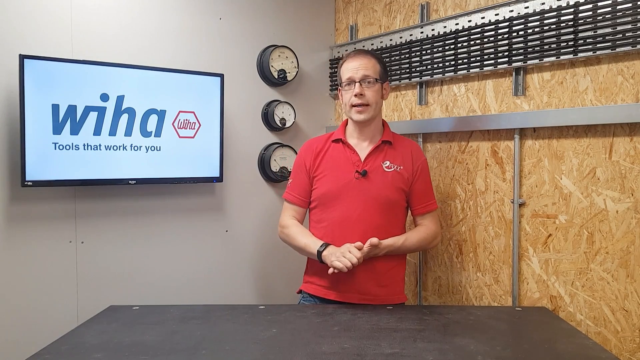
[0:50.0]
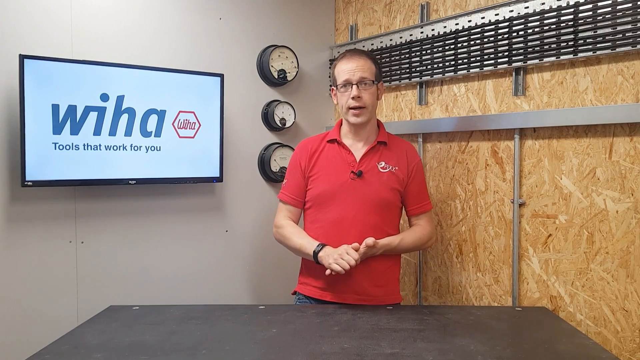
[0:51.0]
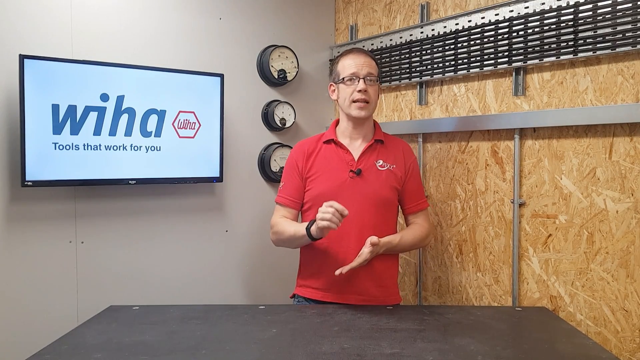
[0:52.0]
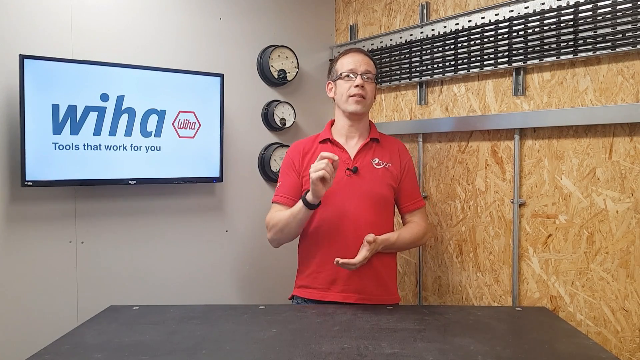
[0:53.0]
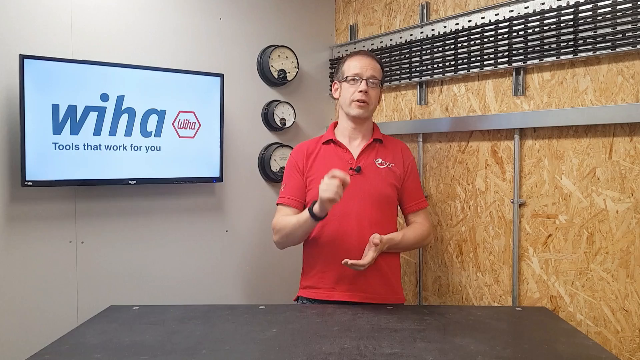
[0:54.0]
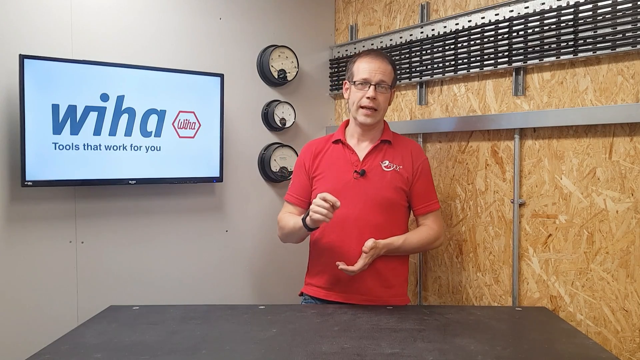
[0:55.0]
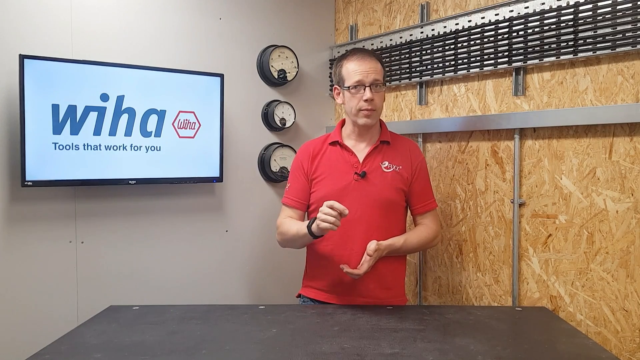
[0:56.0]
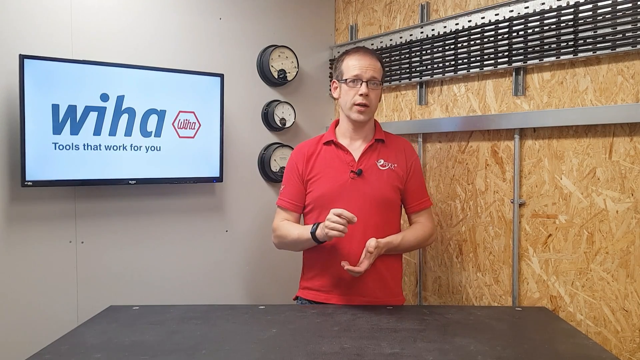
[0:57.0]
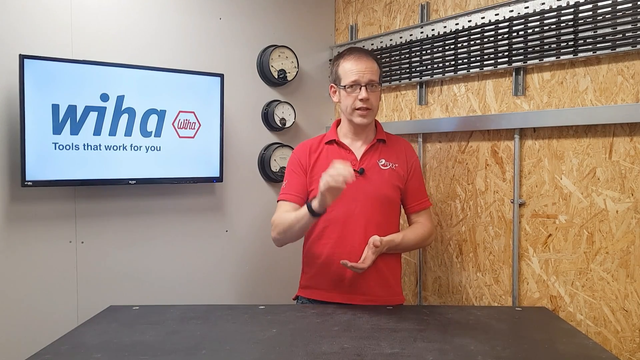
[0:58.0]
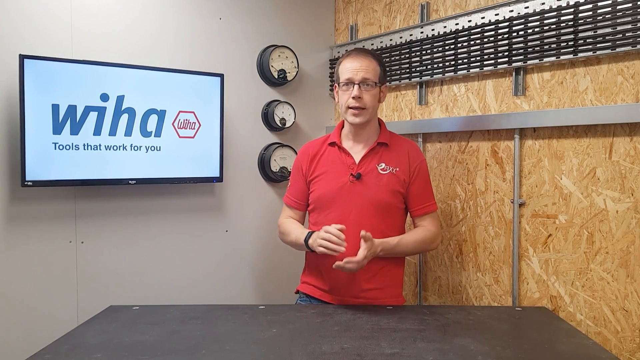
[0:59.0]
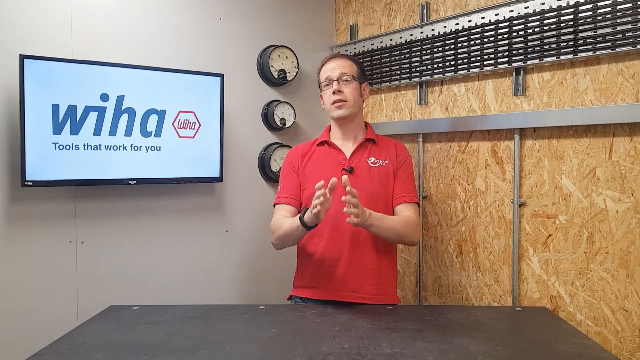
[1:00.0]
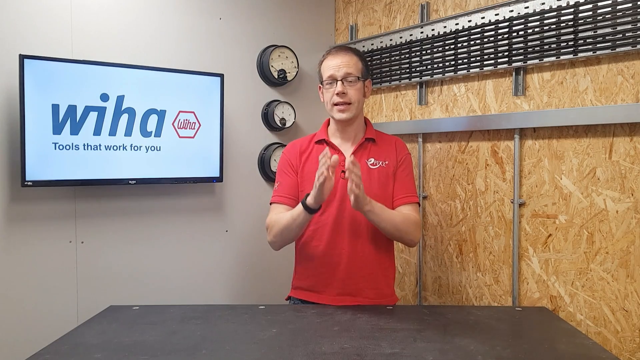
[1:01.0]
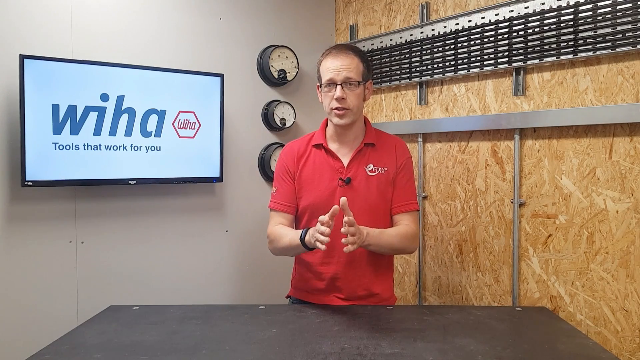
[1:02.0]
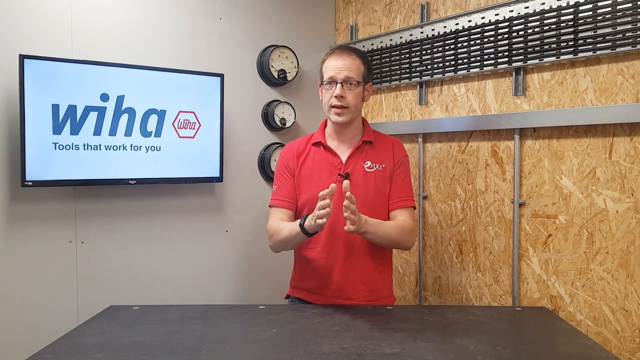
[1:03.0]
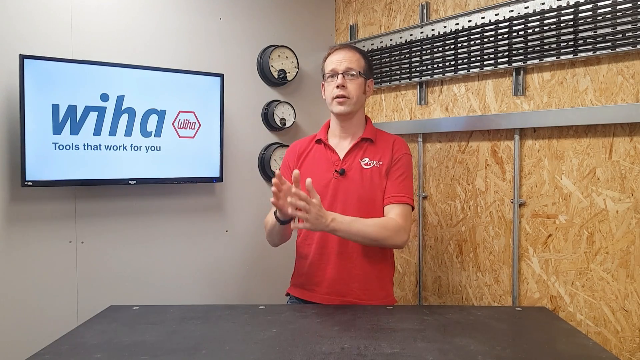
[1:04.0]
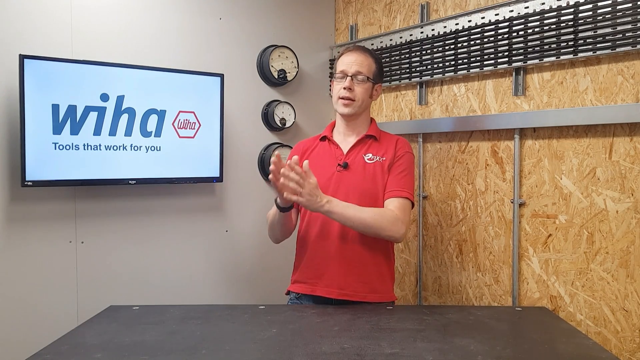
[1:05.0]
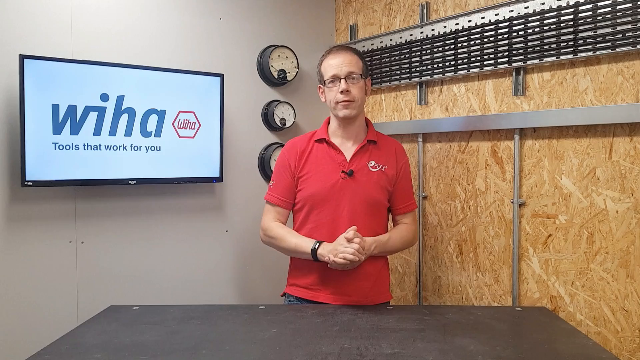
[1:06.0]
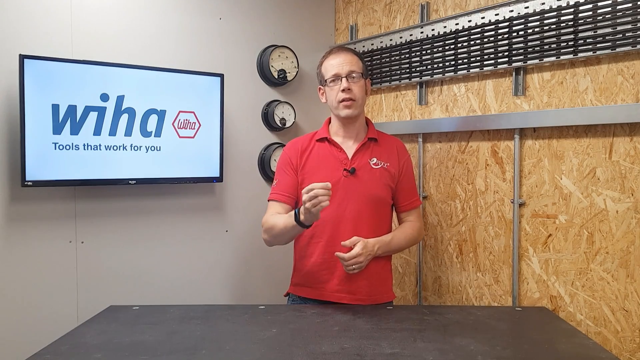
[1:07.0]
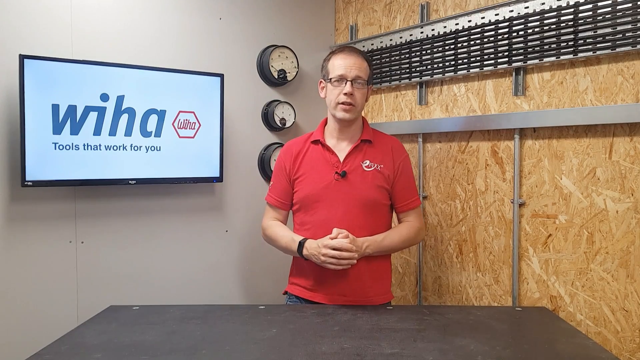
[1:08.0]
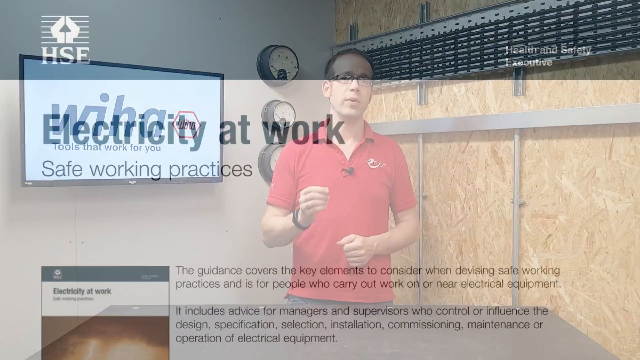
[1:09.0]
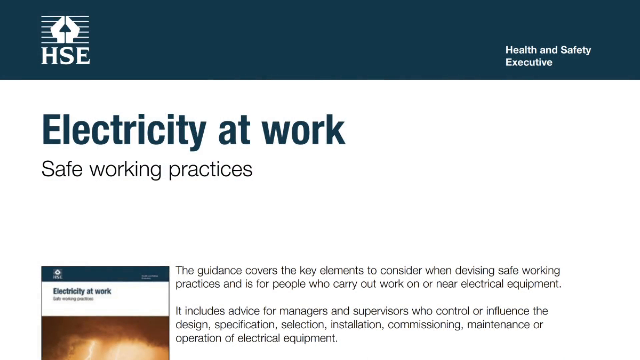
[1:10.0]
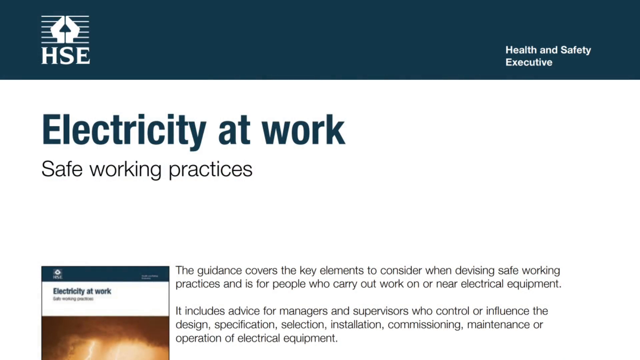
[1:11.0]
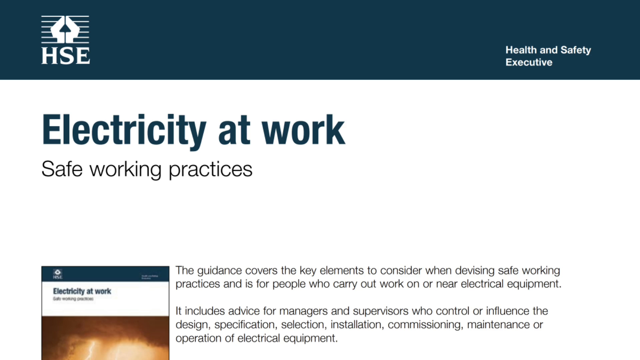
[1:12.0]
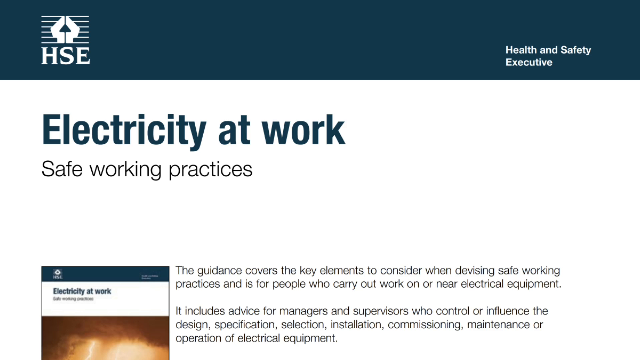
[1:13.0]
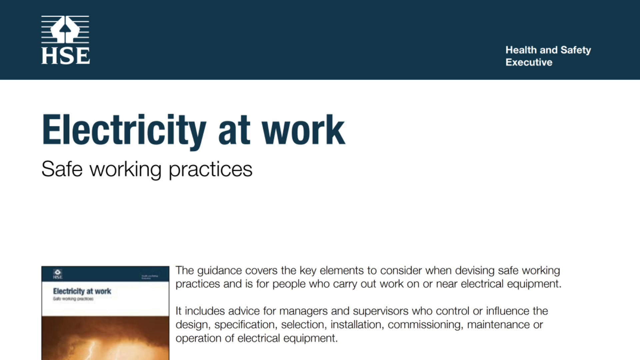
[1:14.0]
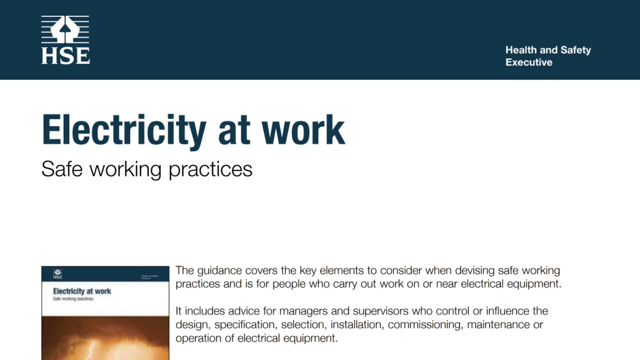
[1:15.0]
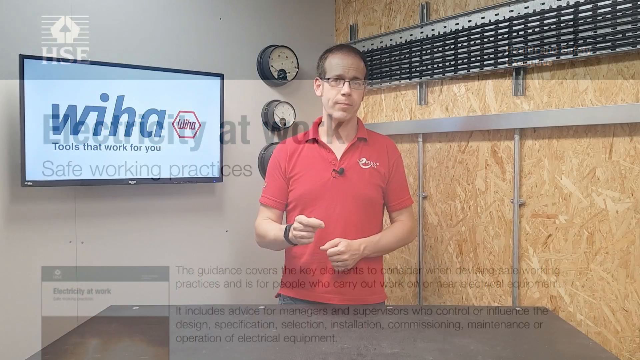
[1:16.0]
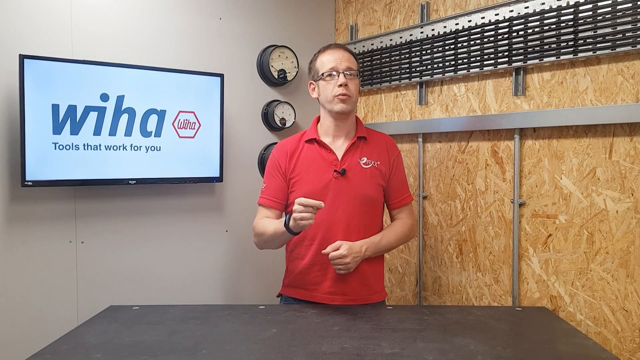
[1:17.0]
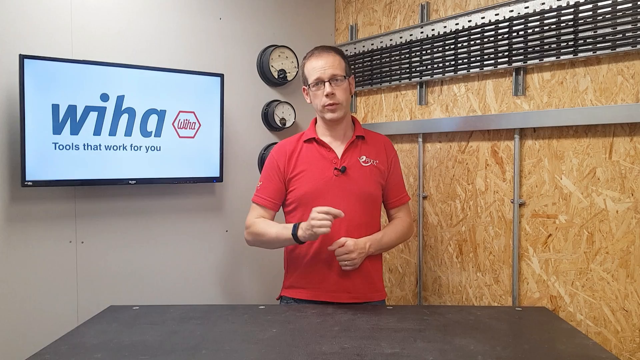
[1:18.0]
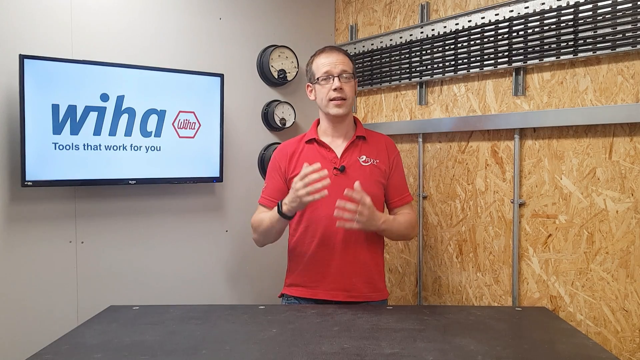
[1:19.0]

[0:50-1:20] The man in the red t-shirt, a representative of WIHA, appears to still be talking, standing in front of a table, with text reading "tools that work with you." No product is visible in front of him. The view then switches to a screen showing an article titled "electricity at work, safe working practices," with "health and safety executive" in the top right. Below, it reads: "the guidelines covers the key elements to consider when devising safe working practices and is for people who carry out work or near electrical equipment. It includes advice for managers and supervisors who control or influence employees." The man then appears again, still talking.